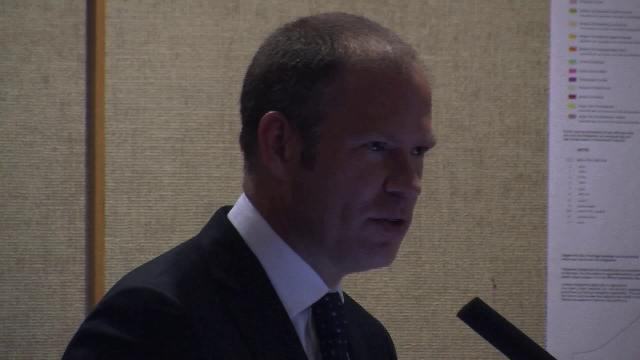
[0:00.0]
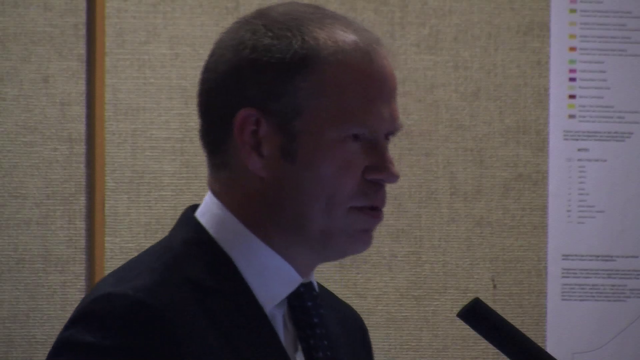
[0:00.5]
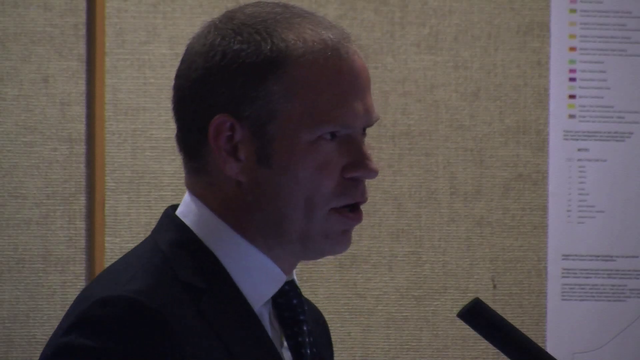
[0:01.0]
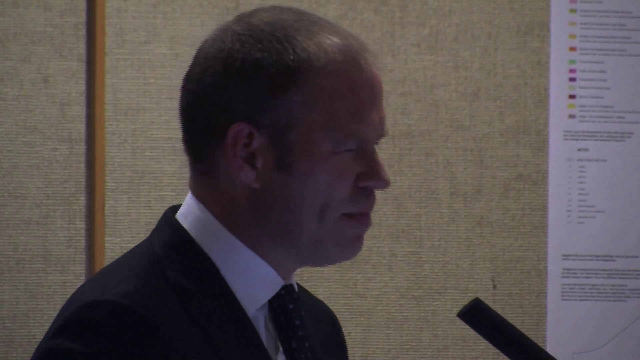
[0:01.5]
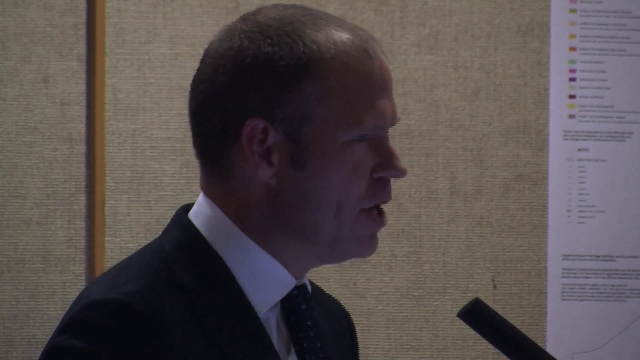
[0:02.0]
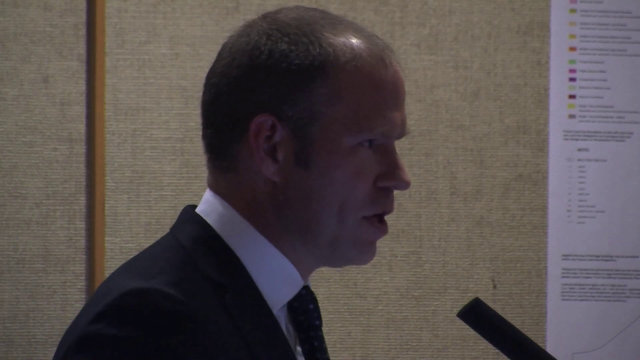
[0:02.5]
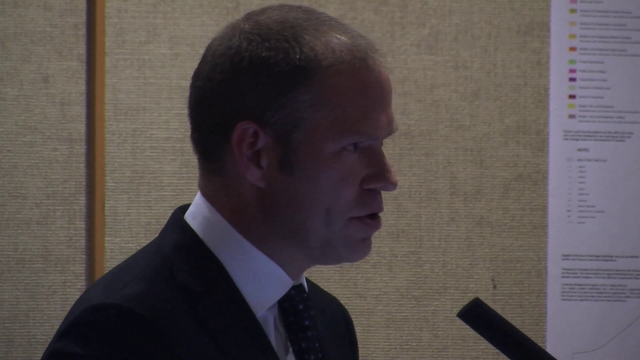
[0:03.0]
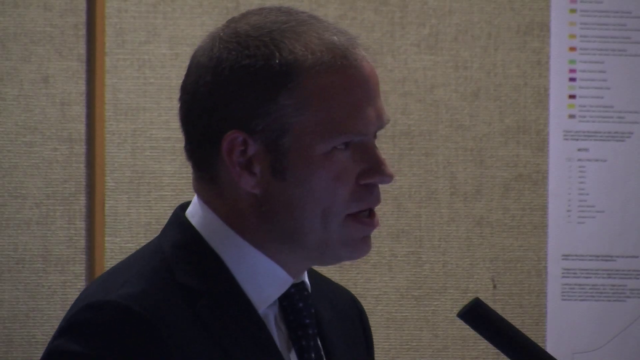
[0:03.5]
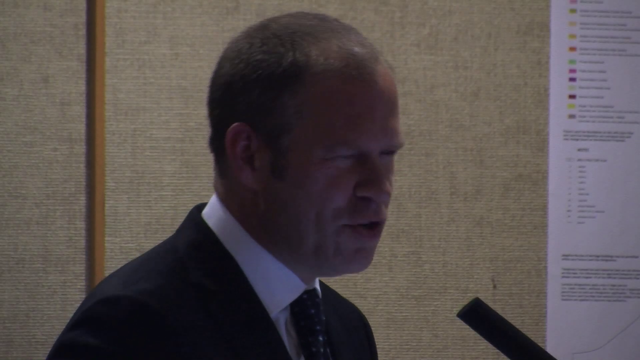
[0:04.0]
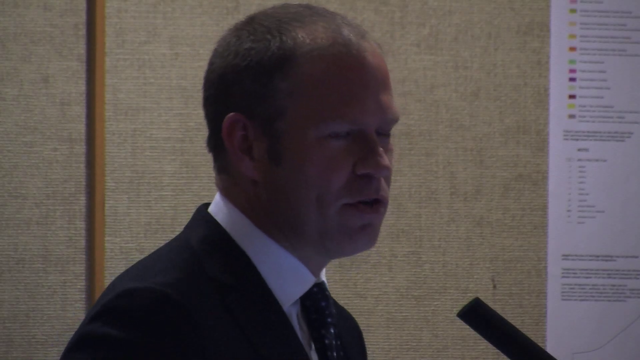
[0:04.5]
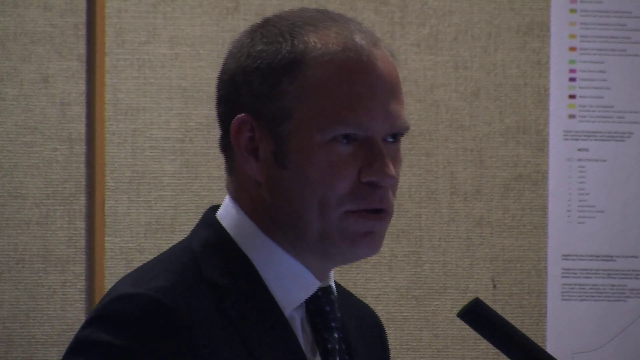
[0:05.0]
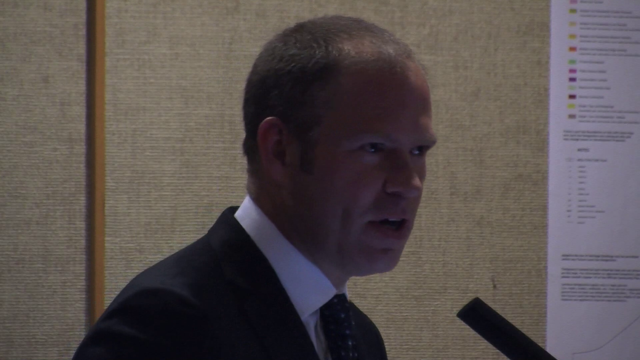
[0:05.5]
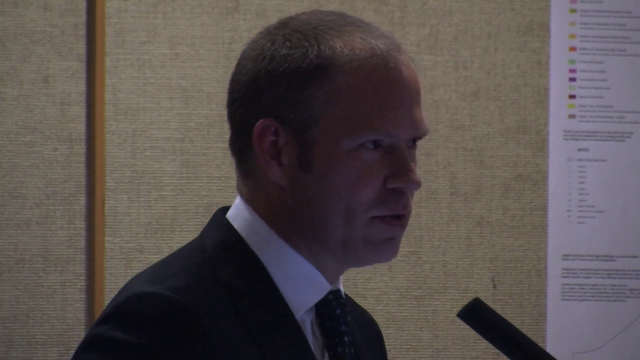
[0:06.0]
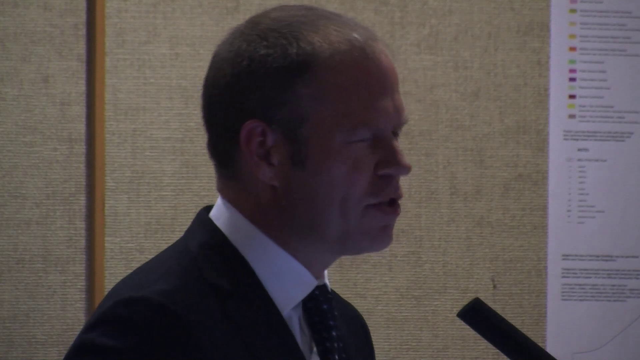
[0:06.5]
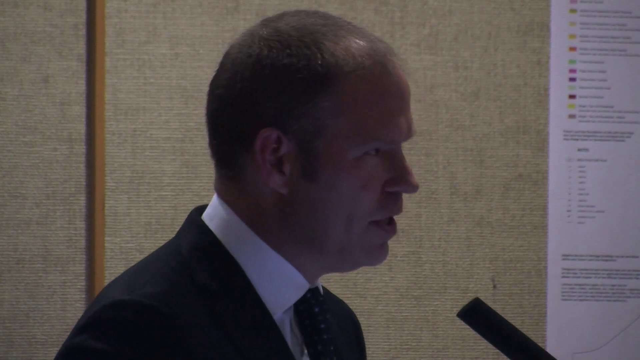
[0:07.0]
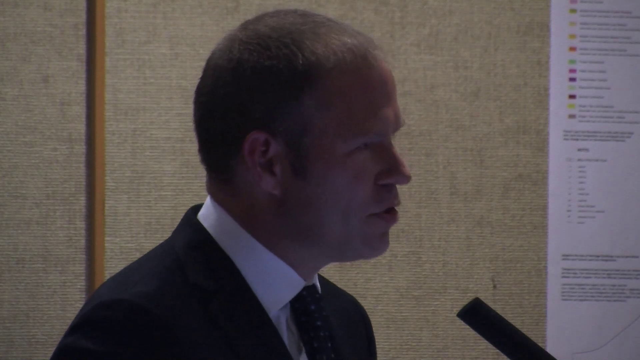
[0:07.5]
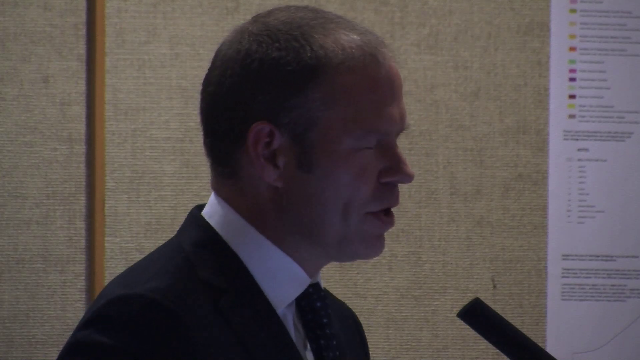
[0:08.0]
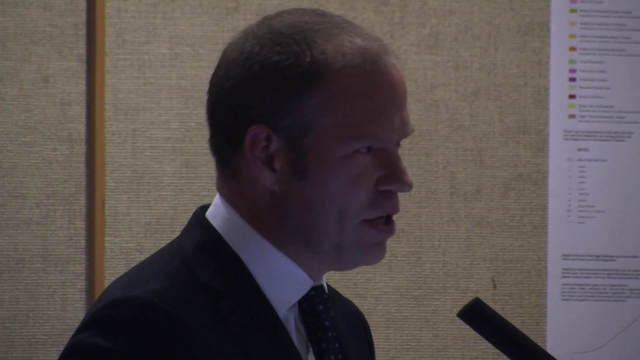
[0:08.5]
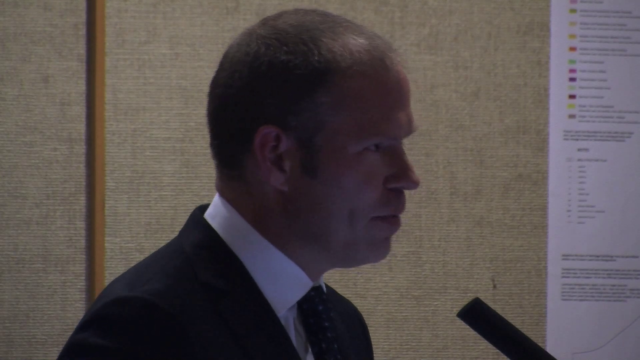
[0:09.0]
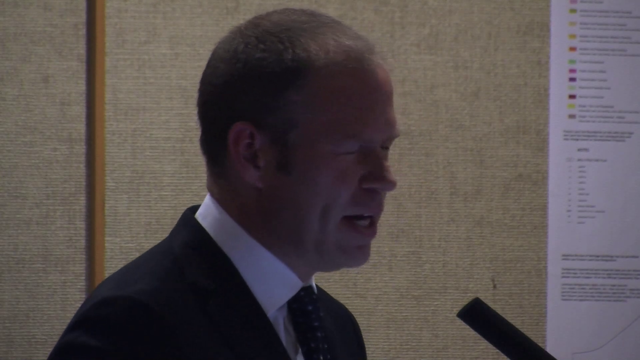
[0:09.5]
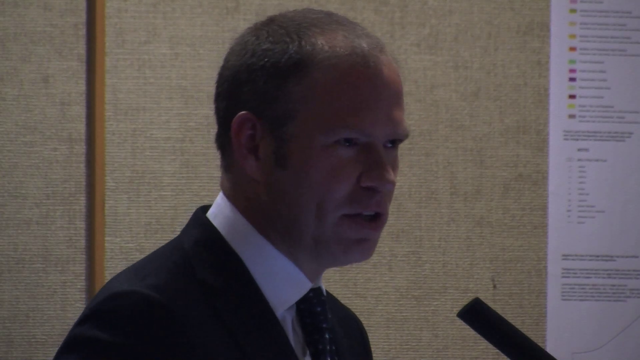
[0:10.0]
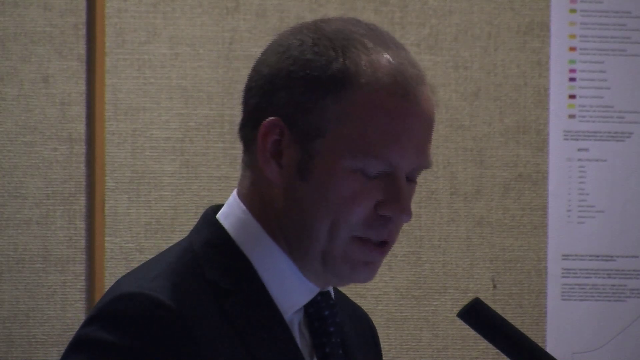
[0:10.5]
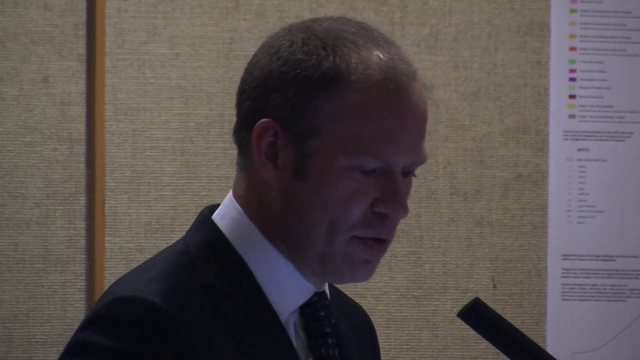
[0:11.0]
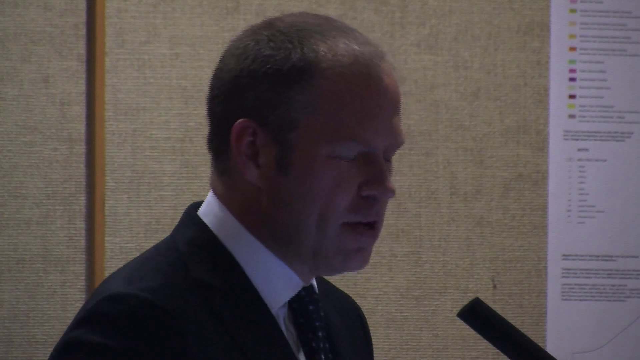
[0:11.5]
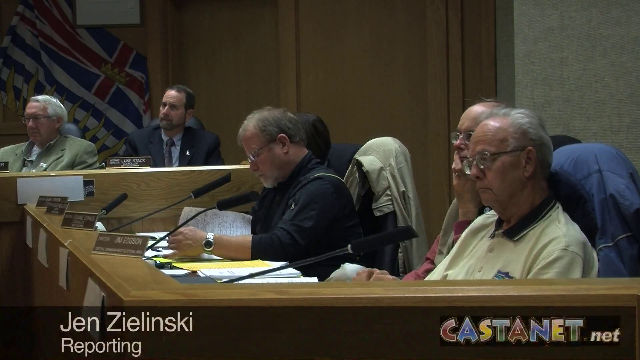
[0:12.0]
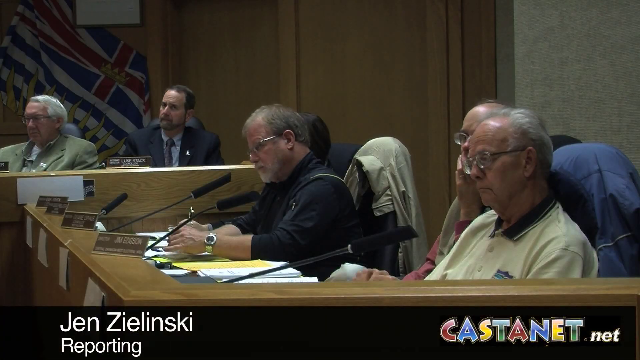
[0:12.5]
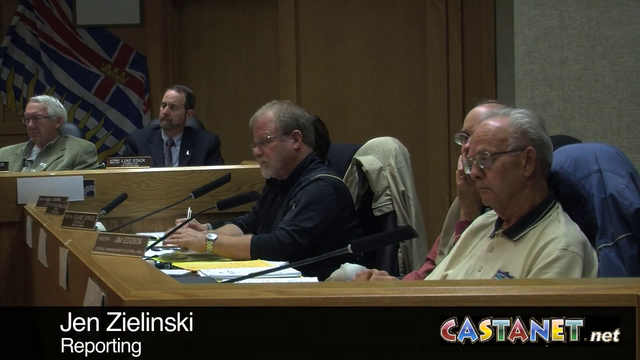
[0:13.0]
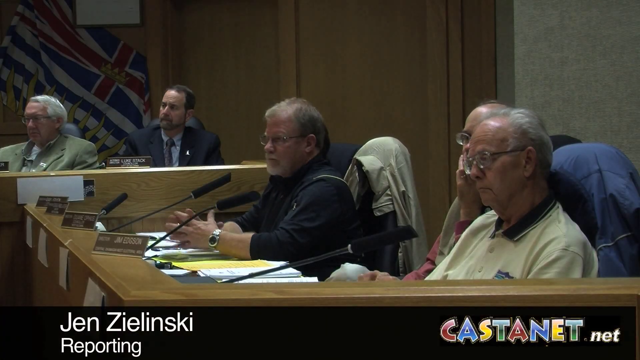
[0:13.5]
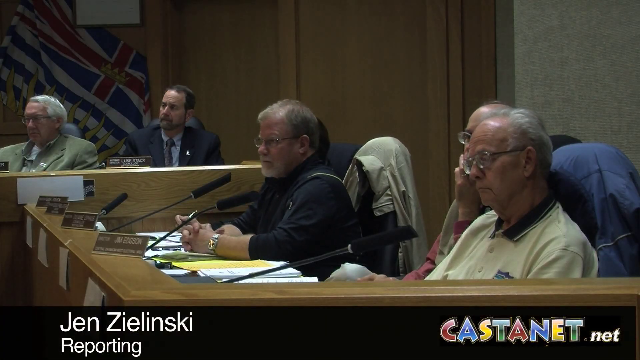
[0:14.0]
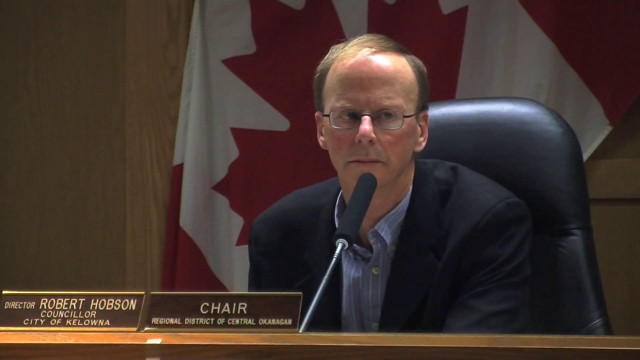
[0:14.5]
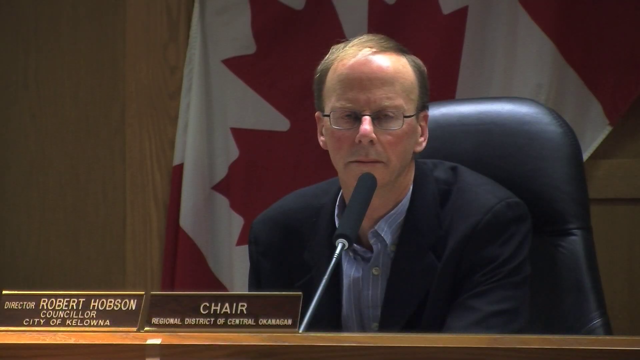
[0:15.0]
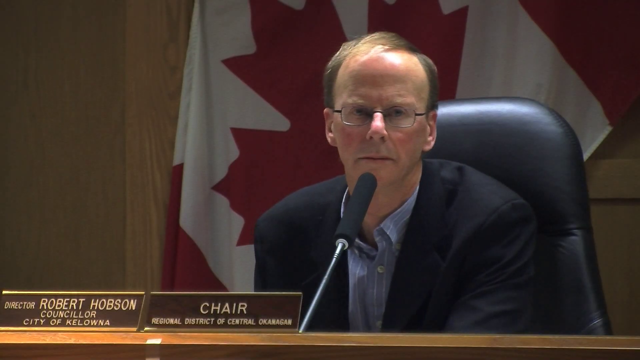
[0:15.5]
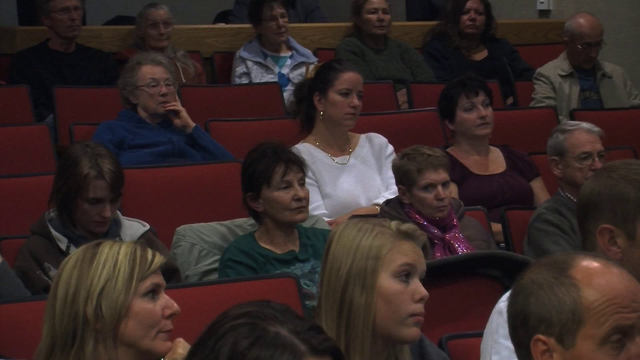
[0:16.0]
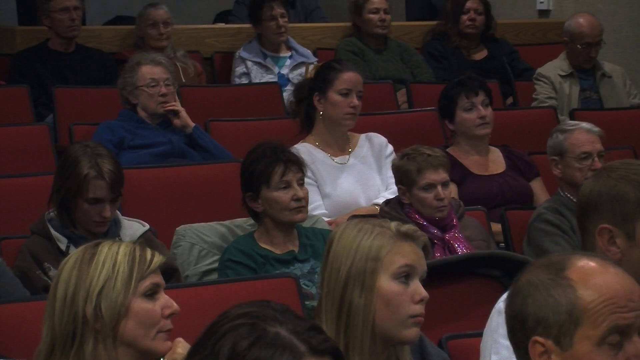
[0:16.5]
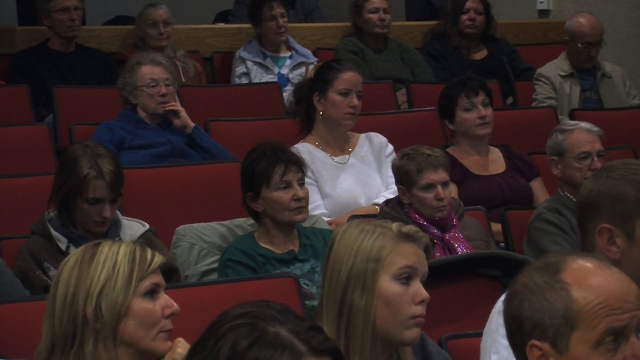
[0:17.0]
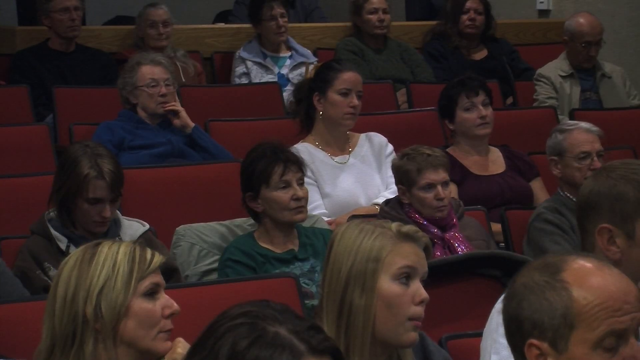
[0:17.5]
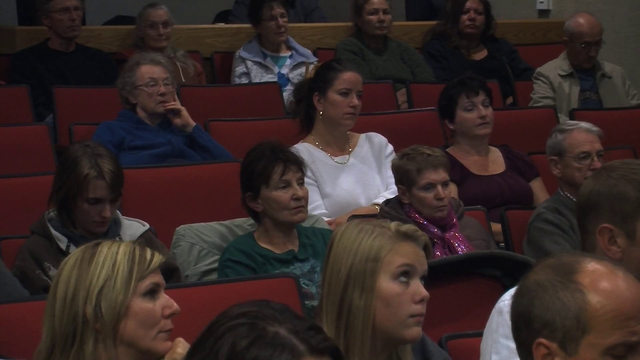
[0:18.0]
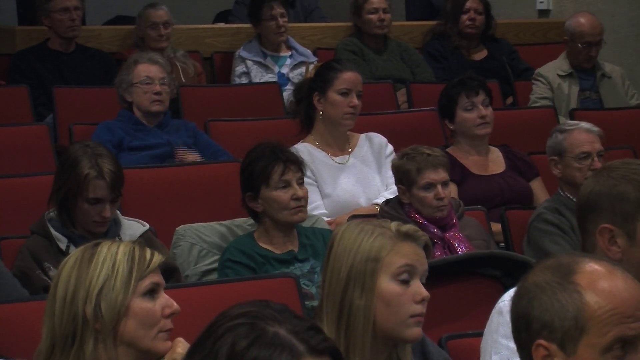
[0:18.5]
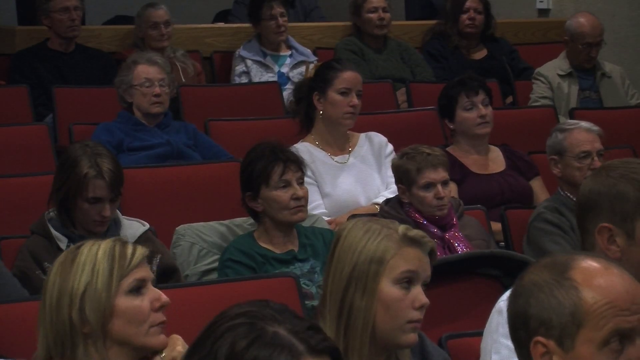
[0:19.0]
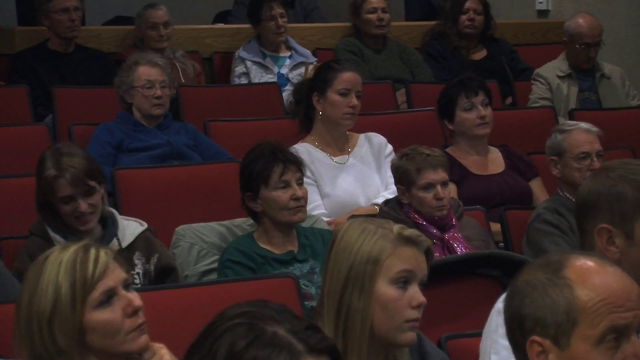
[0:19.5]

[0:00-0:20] A gentleman, identified in the video as Jen Zielinski, gives a speech. He wears a black suit, a white shirt and a black tie with white spots. He has short dark brown hair and no beard, and looks to be well above 40 years of age. A mic is in front of him. He is presenting to a group of gentlemen on a panel. Other people are also present, apparently spectators. Most of them are women and a few are men; the majority, if not all, of those gathered are white and older. The director of the meeting wears spectacles, a black suit and a blue shirt with white stripes; he has short hair and no beard. Behind him is a flag of a country.